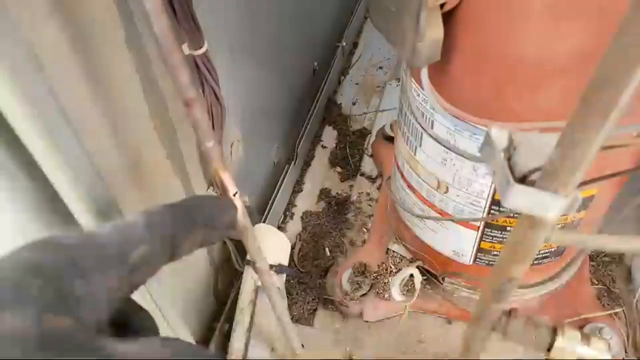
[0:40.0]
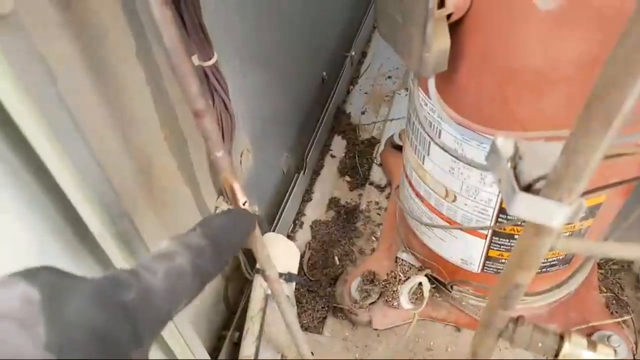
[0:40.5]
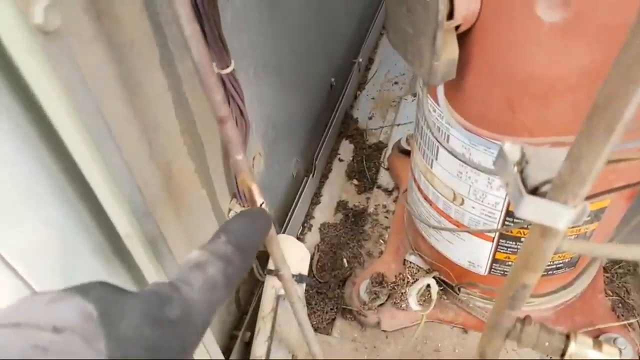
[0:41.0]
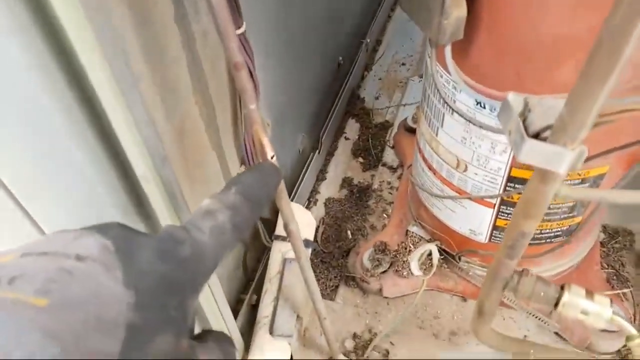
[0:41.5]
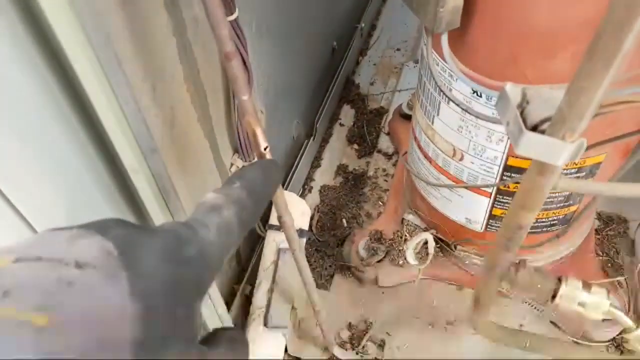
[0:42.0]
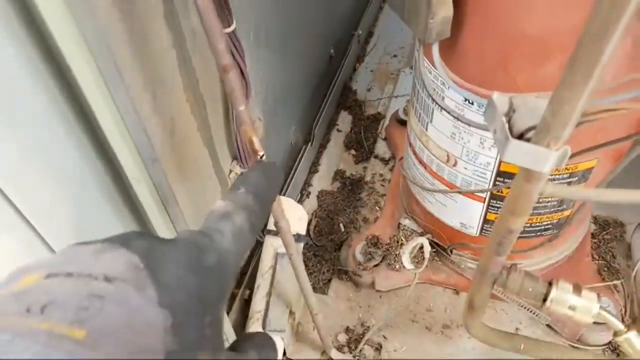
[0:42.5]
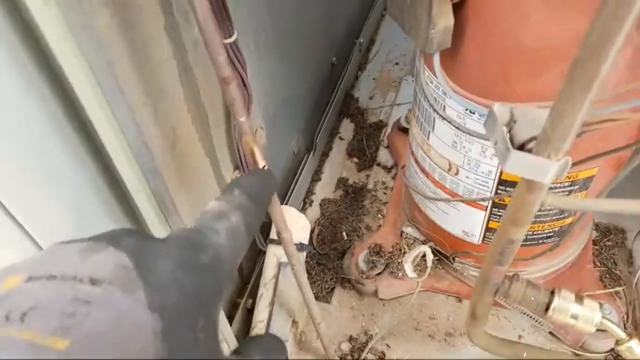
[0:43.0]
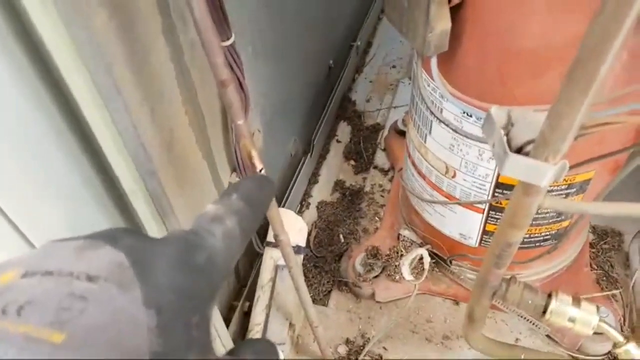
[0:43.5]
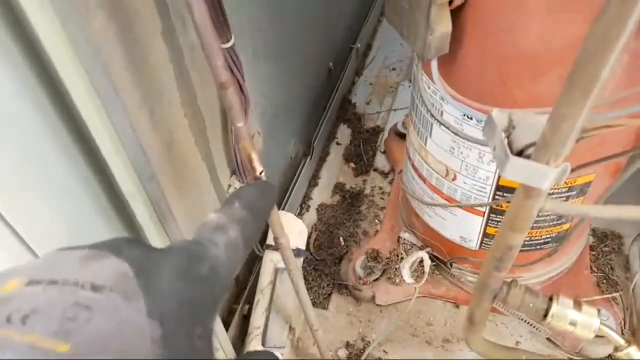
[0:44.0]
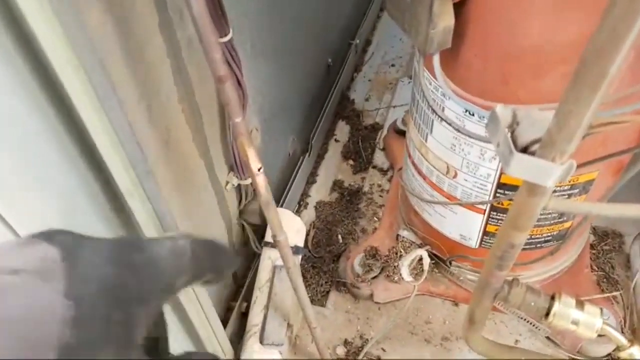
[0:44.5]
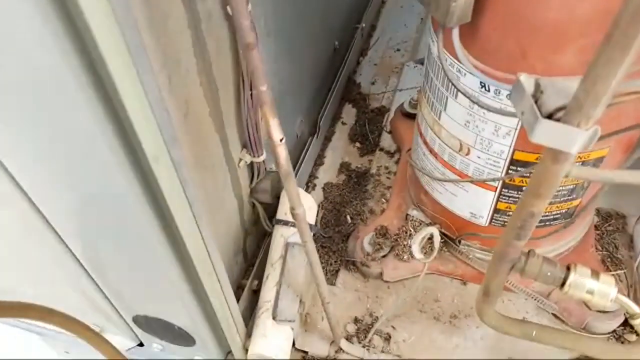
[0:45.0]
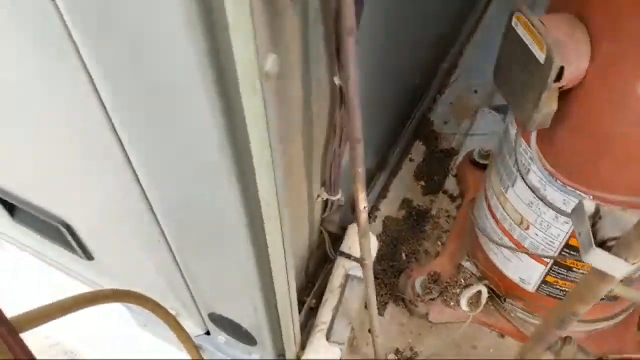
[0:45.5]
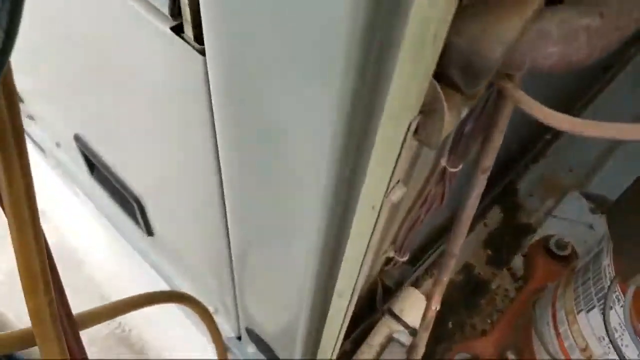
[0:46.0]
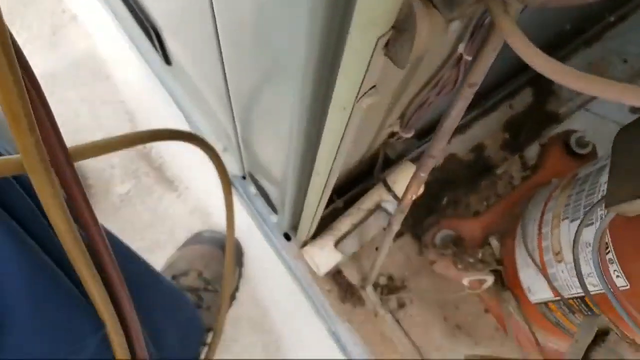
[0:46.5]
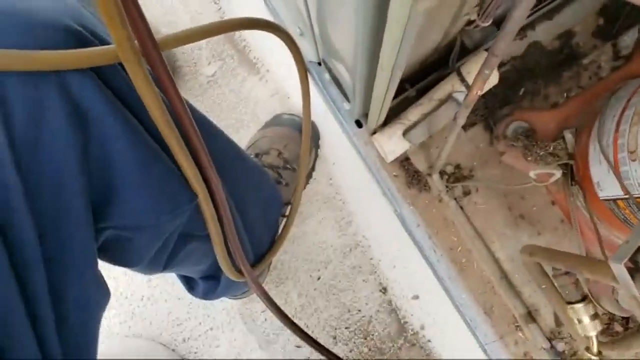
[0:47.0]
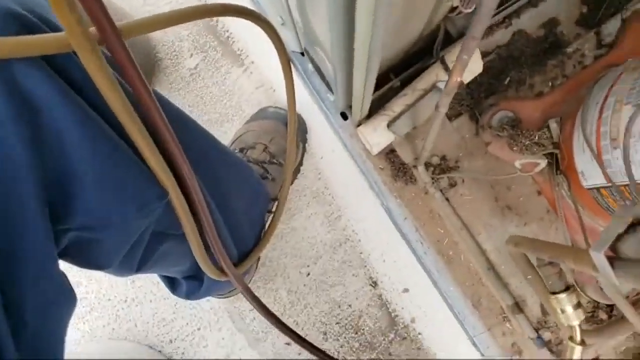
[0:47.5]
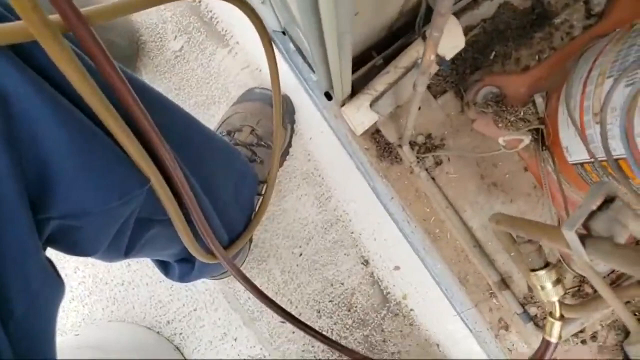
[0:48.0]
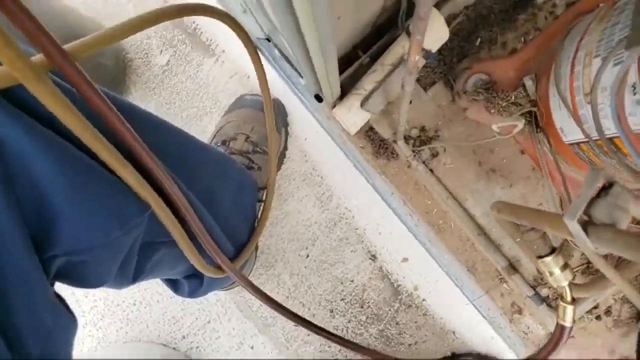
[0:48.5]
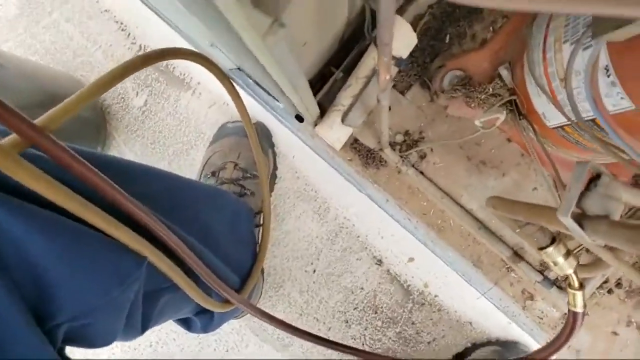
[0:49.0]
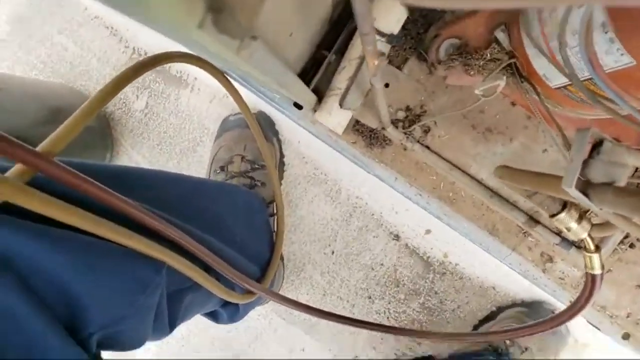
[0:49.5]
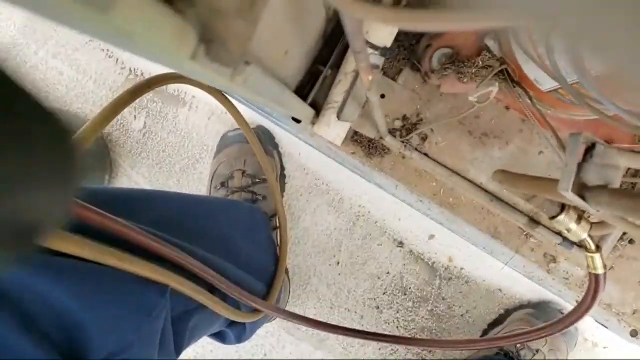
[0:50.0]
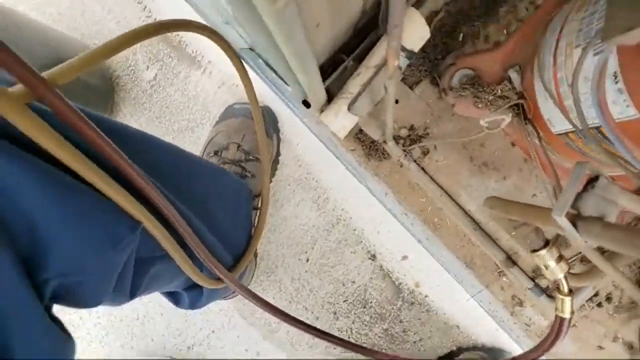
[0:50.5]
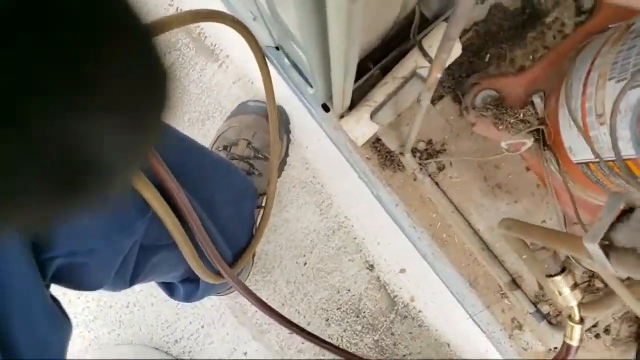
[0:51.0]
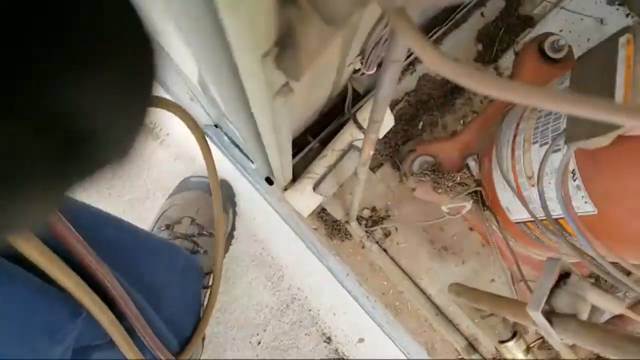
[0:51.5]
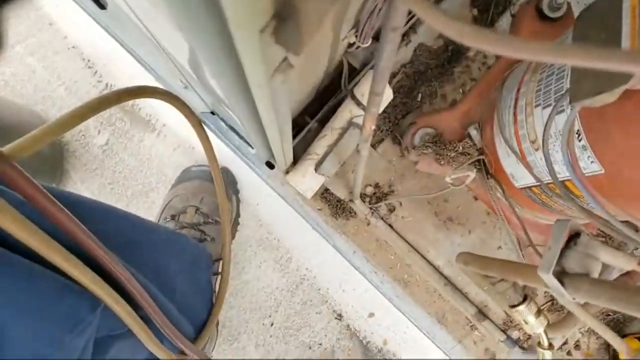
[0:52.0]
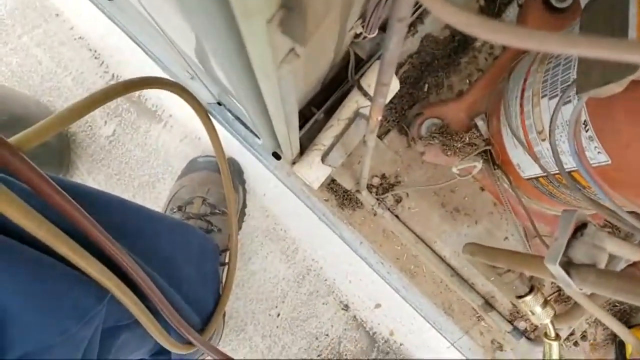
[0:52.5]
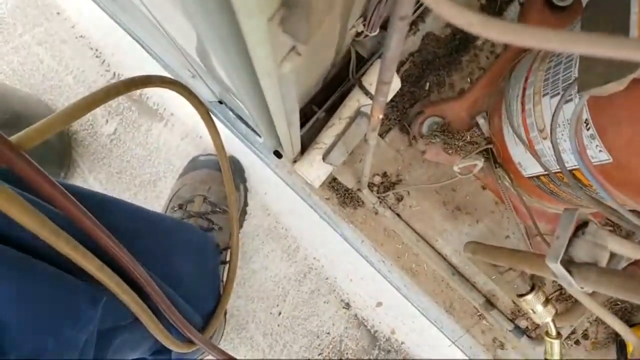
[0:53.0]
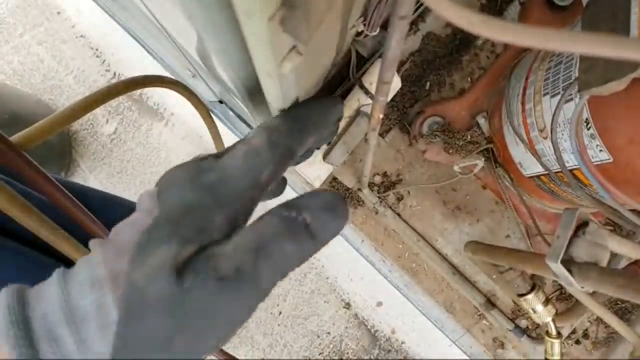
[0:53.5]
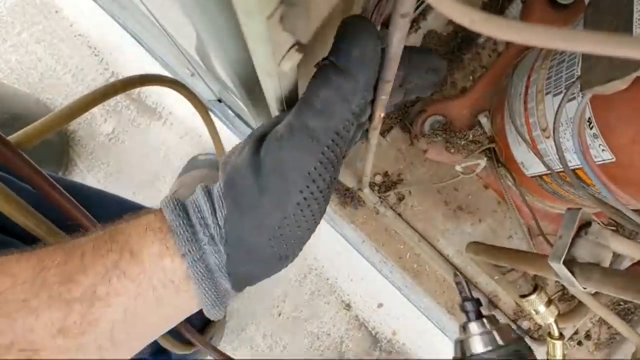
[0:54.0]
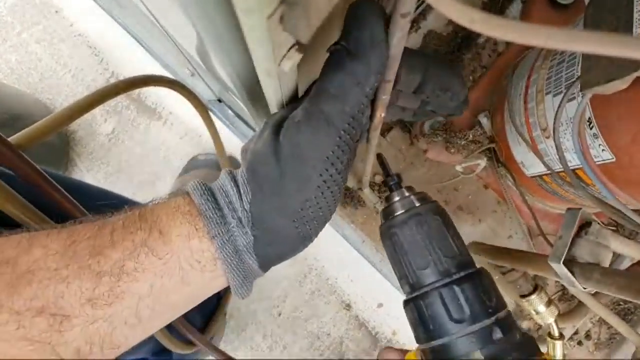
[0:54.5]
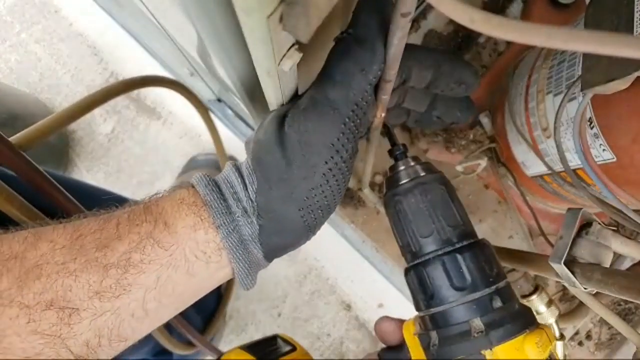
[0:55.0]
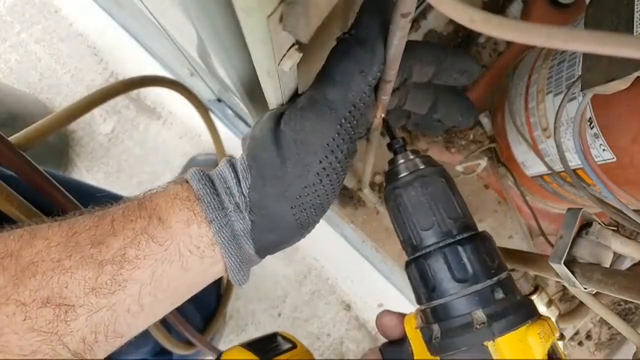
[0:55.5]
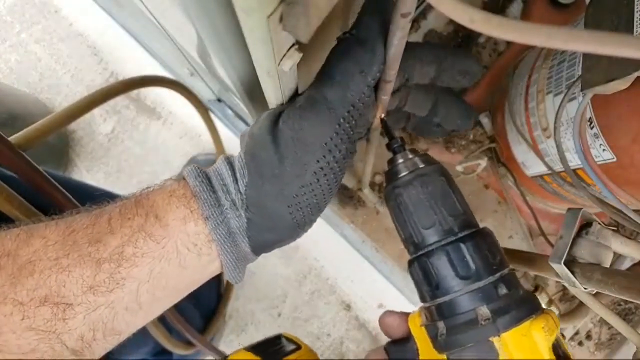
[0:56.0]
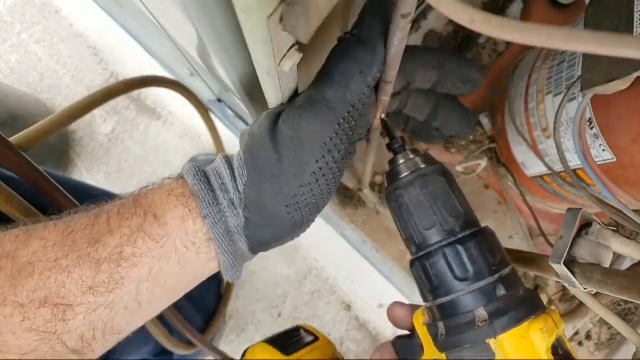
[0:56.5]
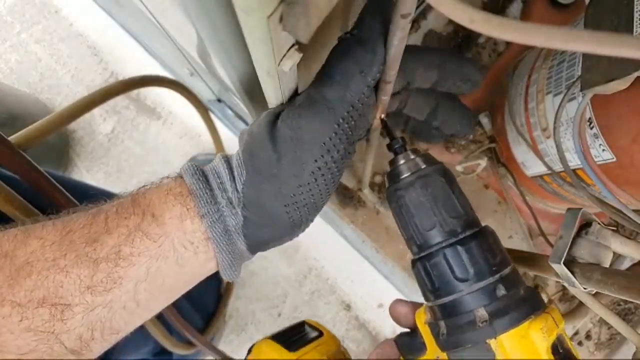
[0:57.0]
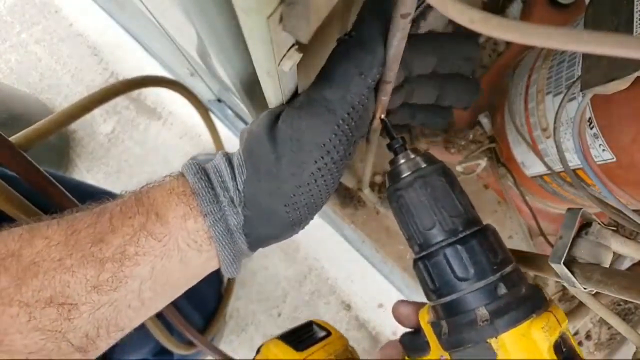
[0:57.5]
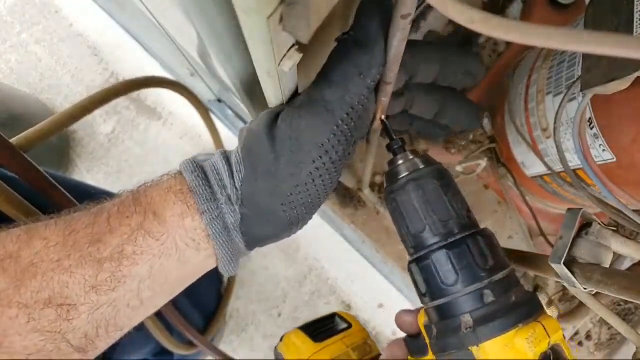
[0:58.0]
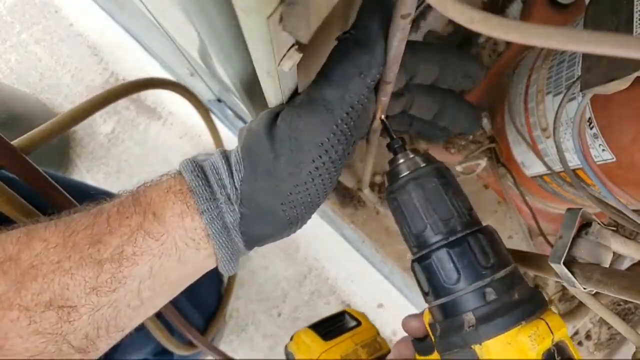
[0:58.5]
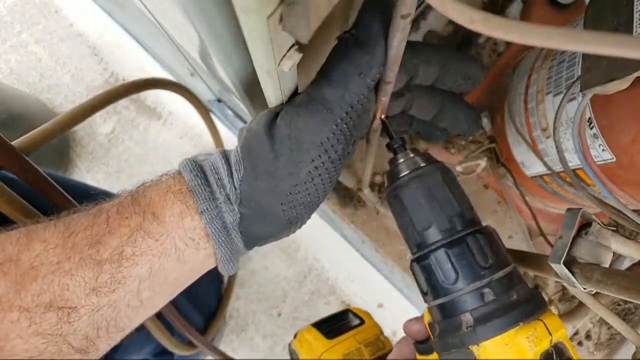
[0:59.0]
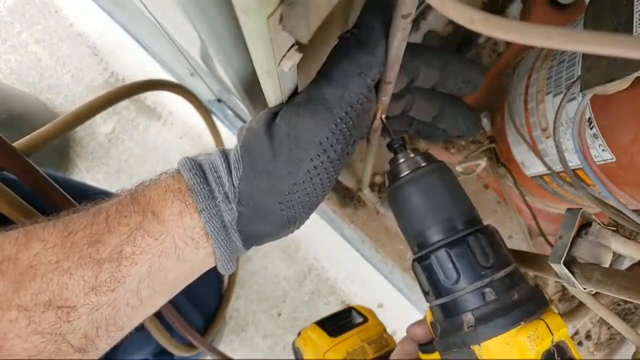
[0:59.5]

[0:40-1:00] The black-gloved left hand points to the small hole in a thin cylindrical copper pipe, the pointer finger pointing directly to the left of the hole. The camera pans to the left and the hand pulls away out of view. The camera is then angled directly down toward the concrete floor, showing a yellow hose and a red hose near the leg and foot of the camera operator. The operator wears blue cotton pants and brown and black boots with brown shoelaces on the left foot. The camera shakes left to right. A portion of the black glove comes into view in the upper left-hand corner, then the entire hand comes into view in the center of the screen, attached to a white arm with hair on it. The gloved fingers wrap behind the copper pipe with the hole in it, and the thumb rests on the side. A drill with a drill head attached comes into view, and the drill head is placed into the small hole in the copper pipe.